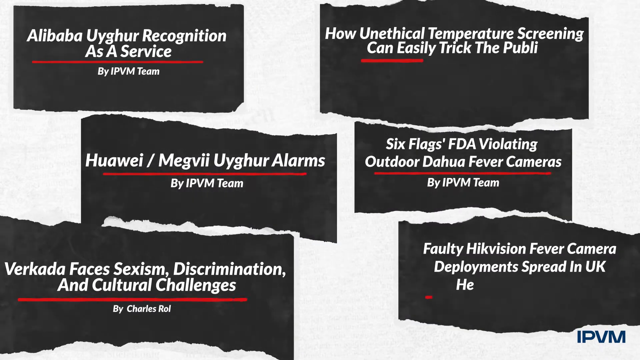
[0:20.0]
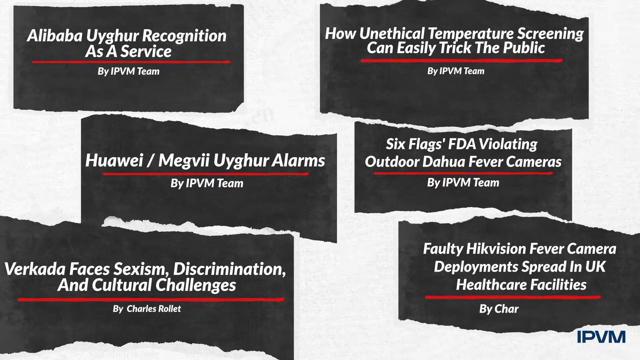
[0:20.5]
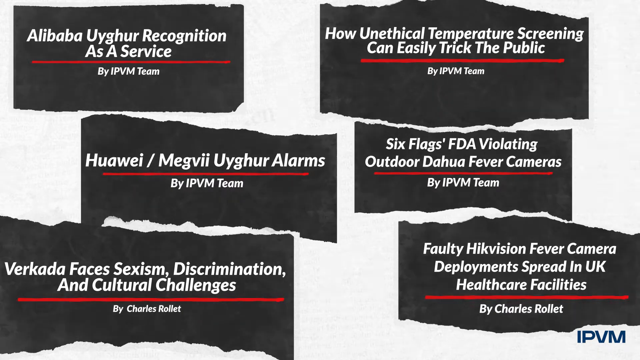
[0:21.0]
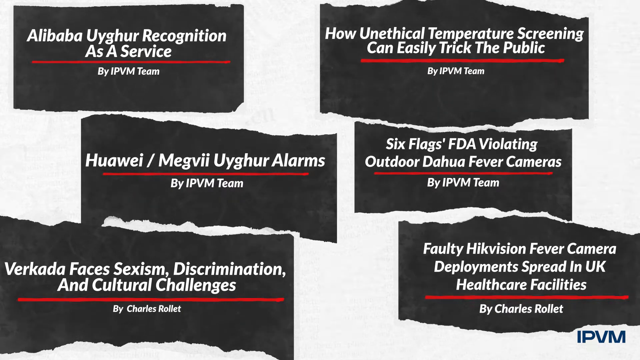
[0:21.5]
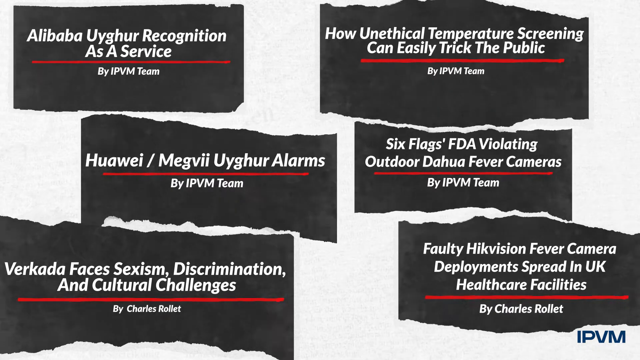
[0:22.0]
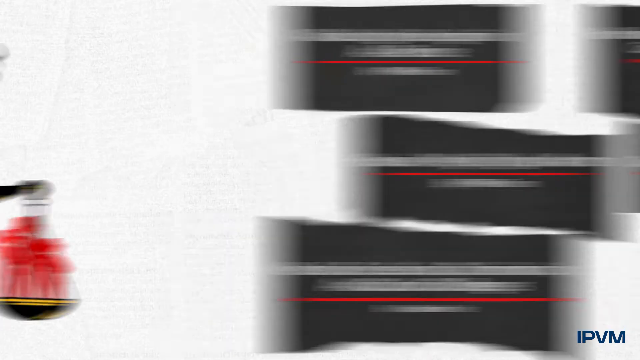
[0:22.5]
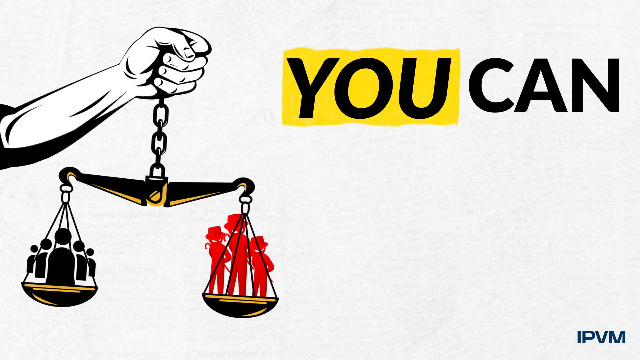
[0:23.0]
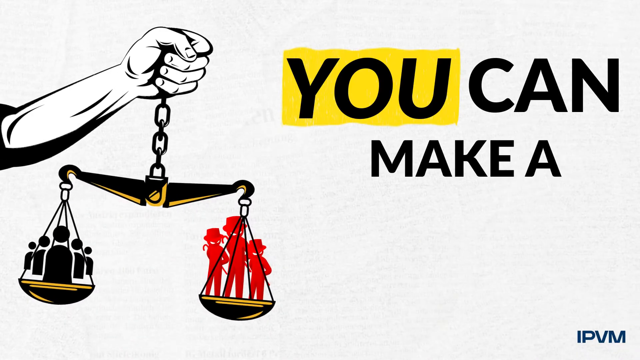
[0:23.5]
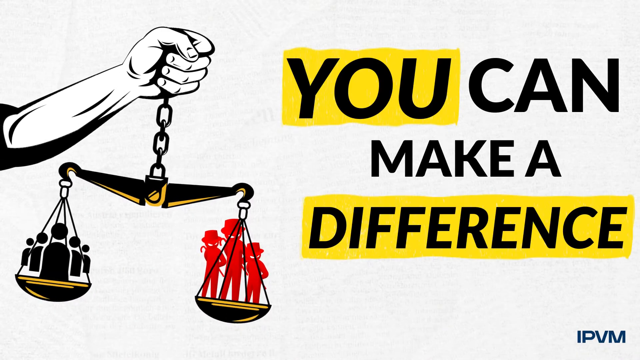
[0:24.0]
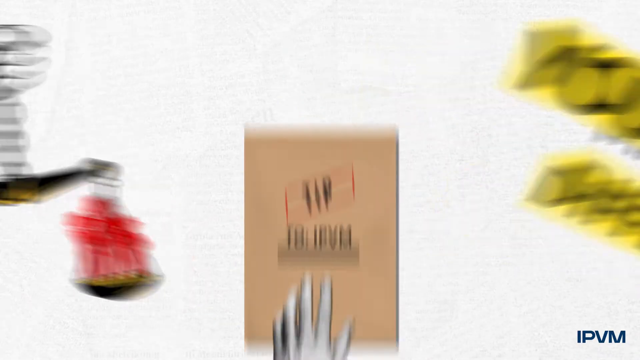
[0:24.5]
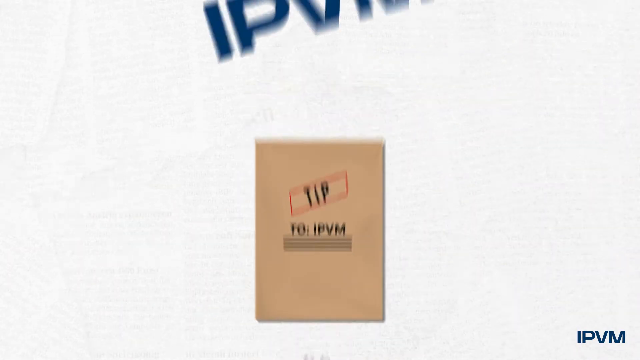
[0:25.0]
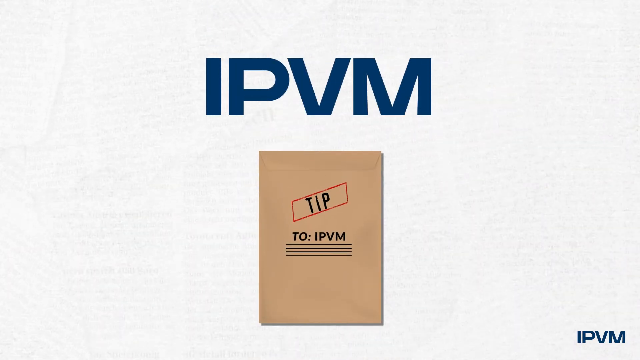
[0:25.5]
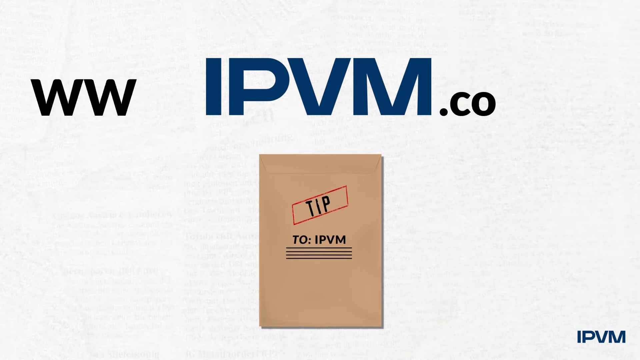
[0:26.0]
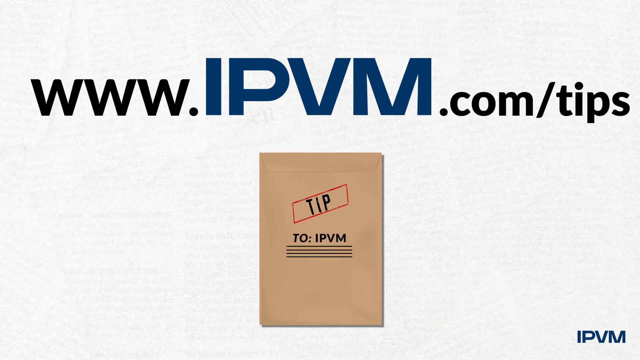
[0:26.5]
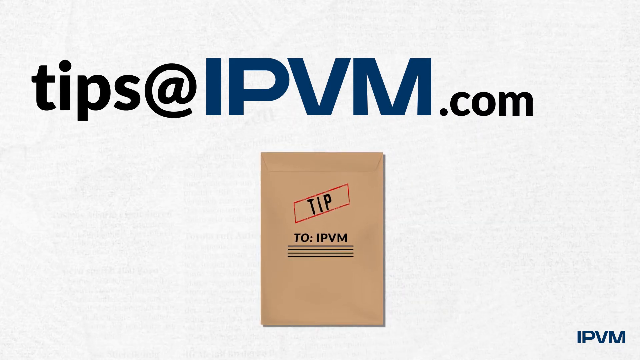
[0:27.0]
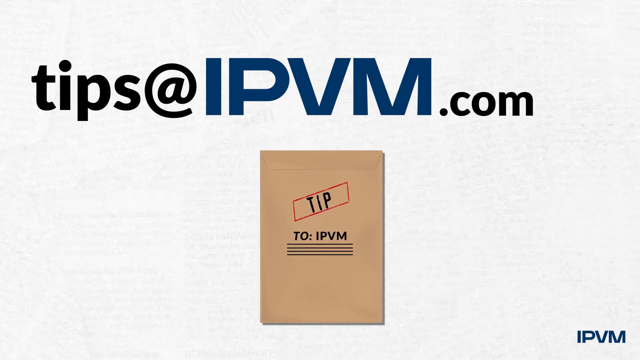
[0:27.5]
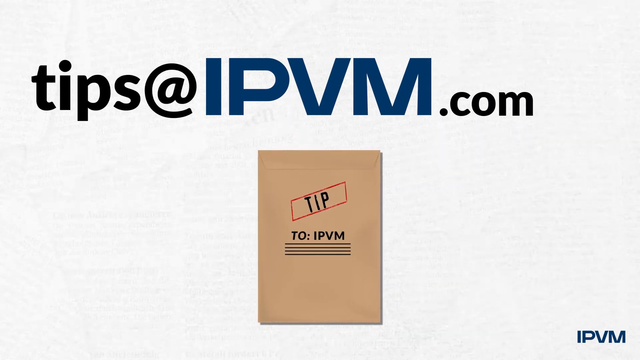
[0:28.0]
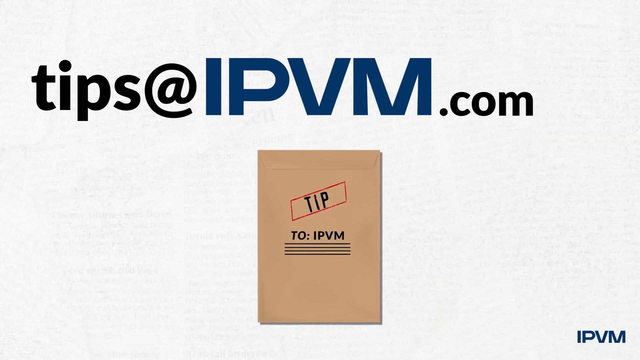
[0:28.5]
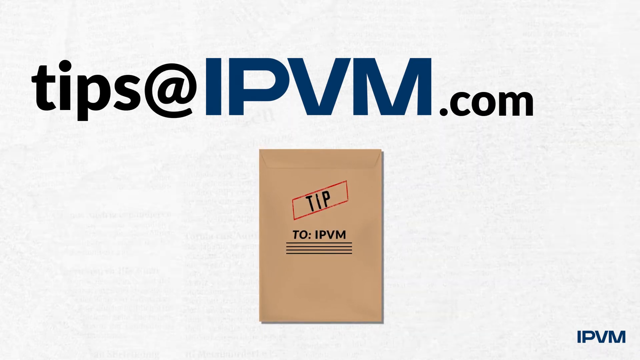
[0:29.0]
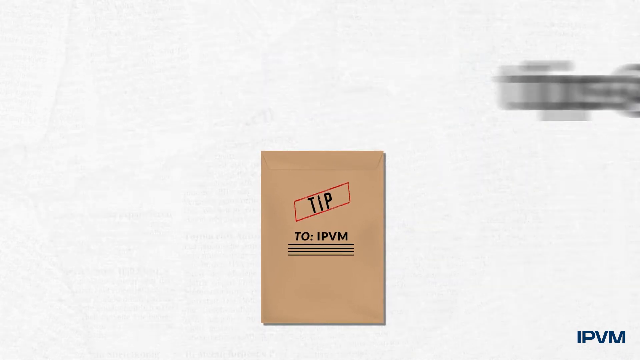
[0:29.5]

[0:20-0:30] Five or six cut-out newspaper articles are shown. The first, "Alibaba Uyghur recognition as a service," and at least the first four are written by IPVM team. The second is "How unethical temperature screening can easily trick the public," the third is a headline ending in "Uyghur alarms," and the fourth is "Six Flags FDA violating outdoor Dahua fever cameras." The article on the bottom left is "Verkada faces sexism, discrimination, and cultural challenges" by Charles Rowlett, and the sixth, on the far right, is "Faulty Hikvision fever camera deployment spread in UK healthcare facilities" by Charles Rowlett. The scene cuts to a justice scale with the text "you can make a difference," with "you" and "difference" highlighted. Then a manila envelope appears with the stamp "tip" and "to IPVM," along with the URL "IPVM.com" and an email address, "tips at IPVM.com."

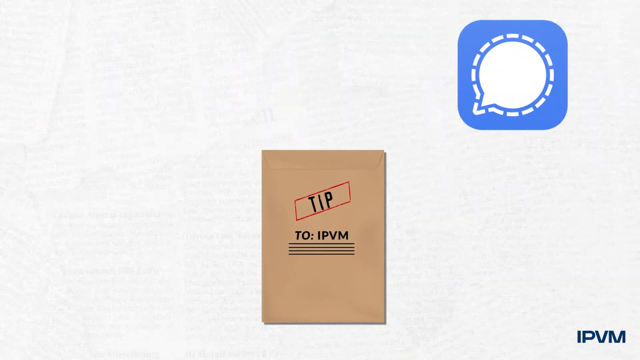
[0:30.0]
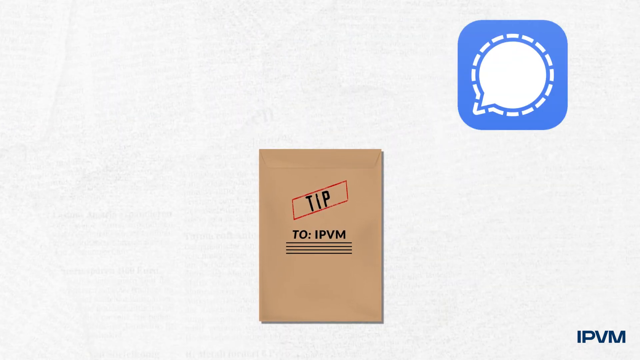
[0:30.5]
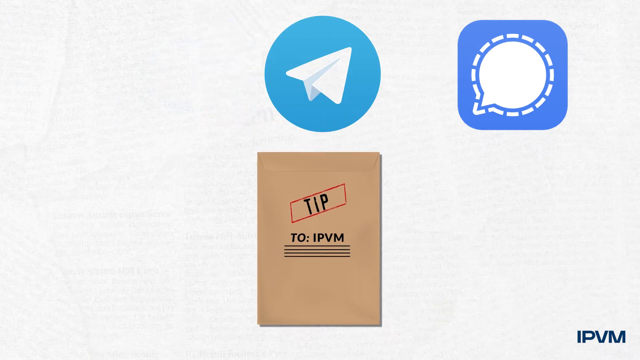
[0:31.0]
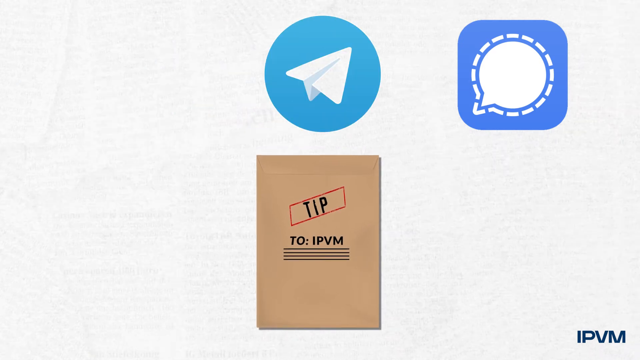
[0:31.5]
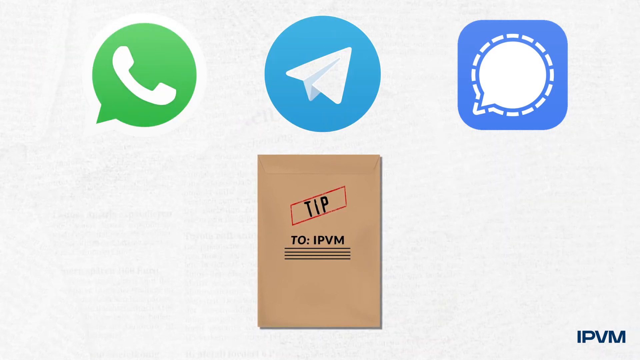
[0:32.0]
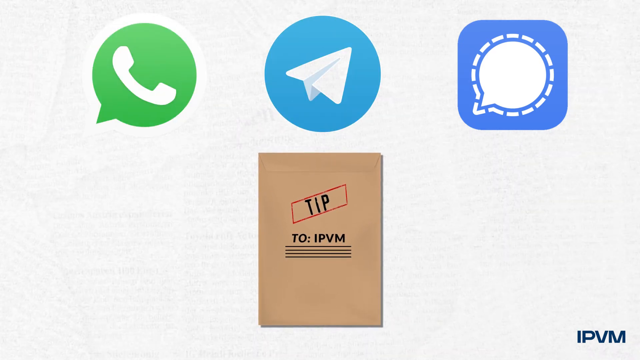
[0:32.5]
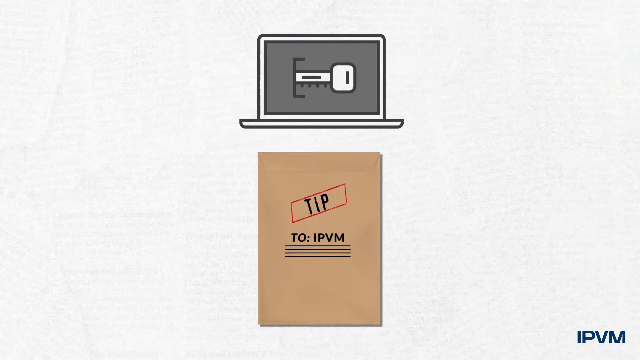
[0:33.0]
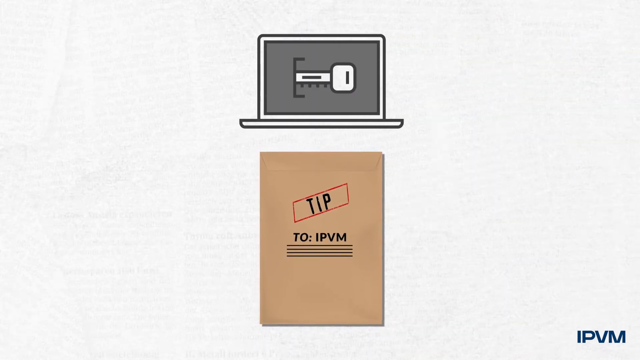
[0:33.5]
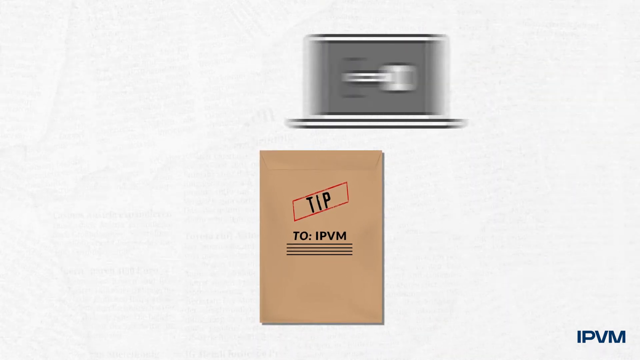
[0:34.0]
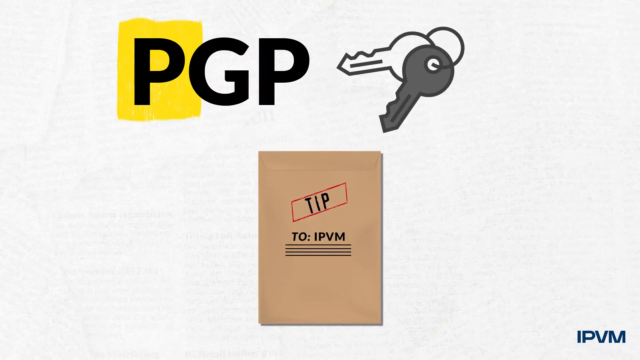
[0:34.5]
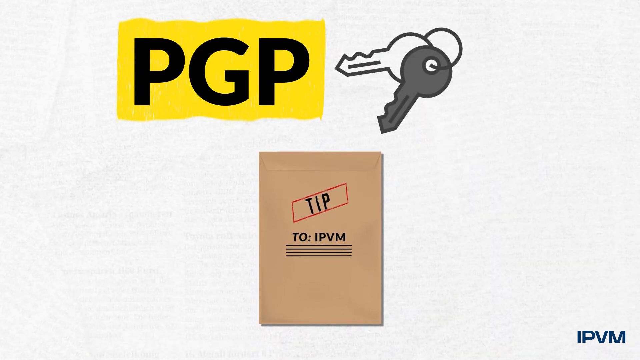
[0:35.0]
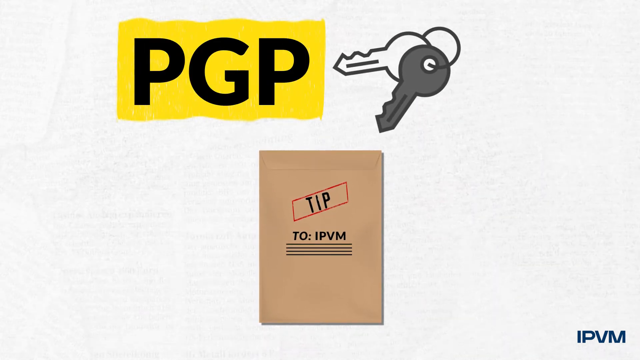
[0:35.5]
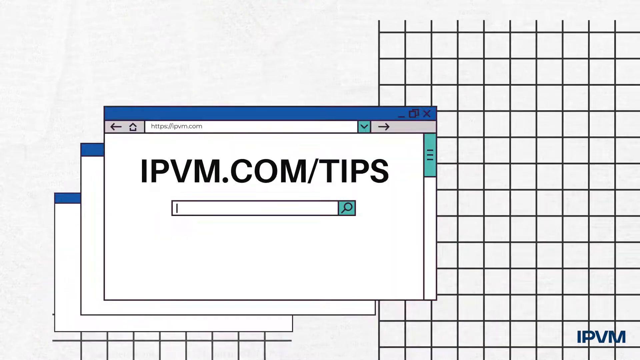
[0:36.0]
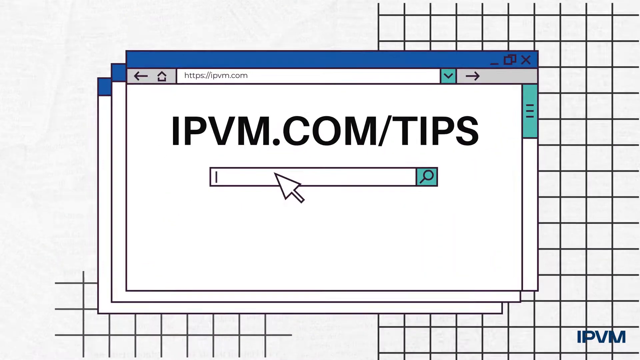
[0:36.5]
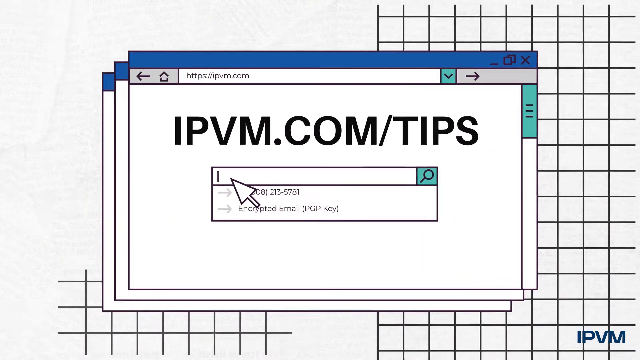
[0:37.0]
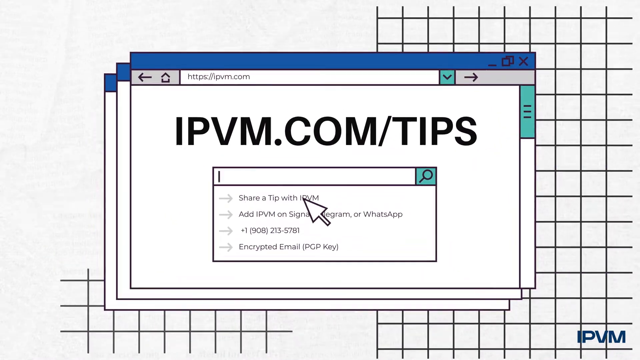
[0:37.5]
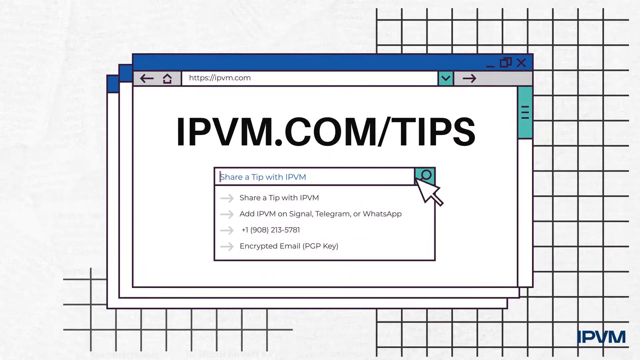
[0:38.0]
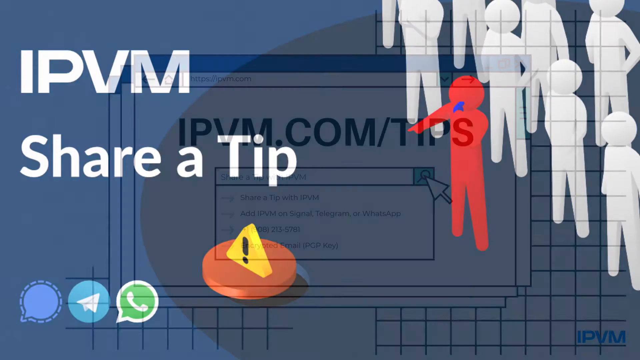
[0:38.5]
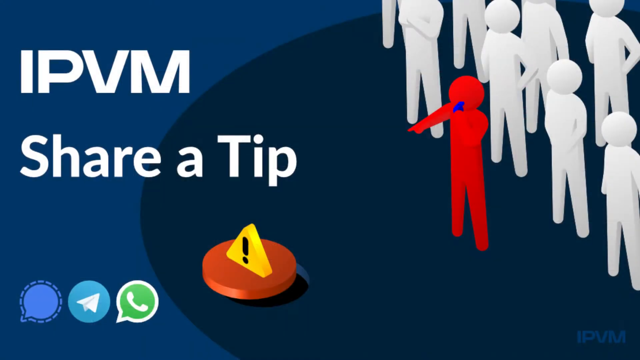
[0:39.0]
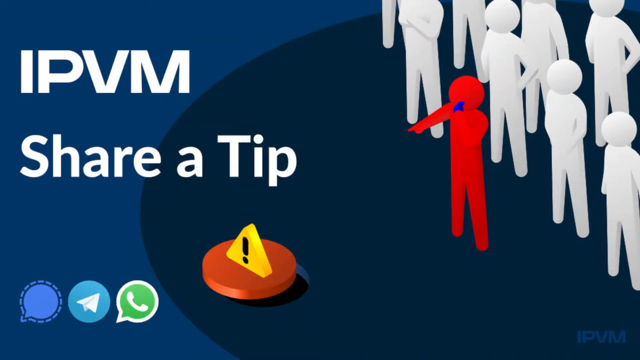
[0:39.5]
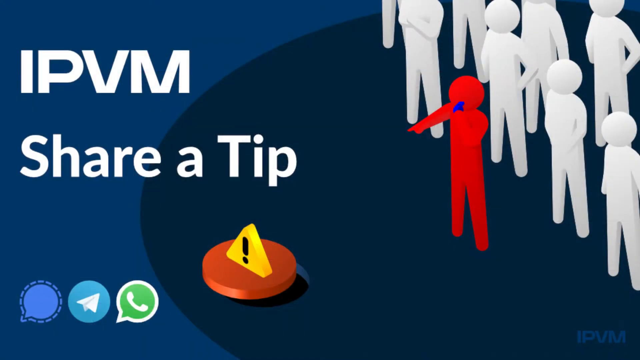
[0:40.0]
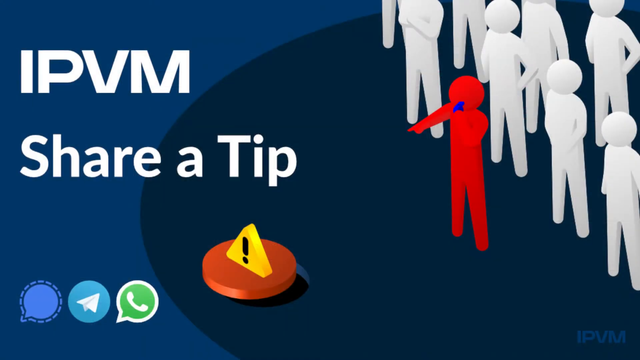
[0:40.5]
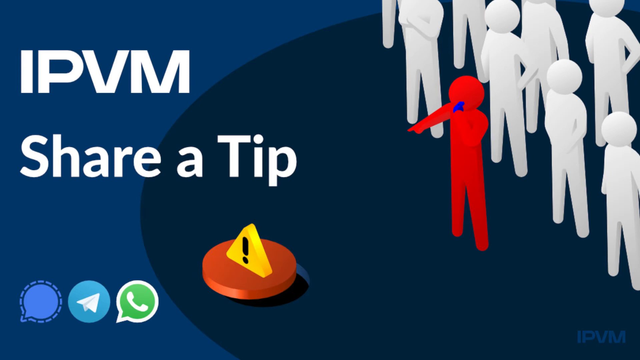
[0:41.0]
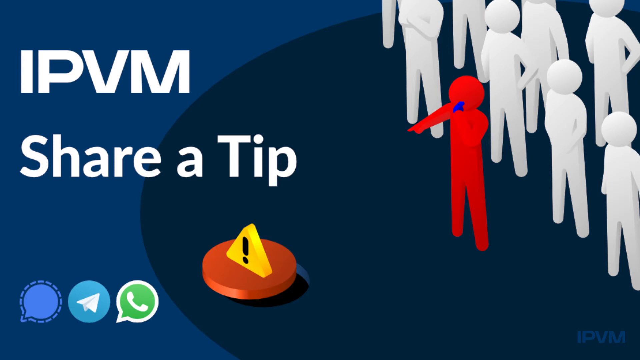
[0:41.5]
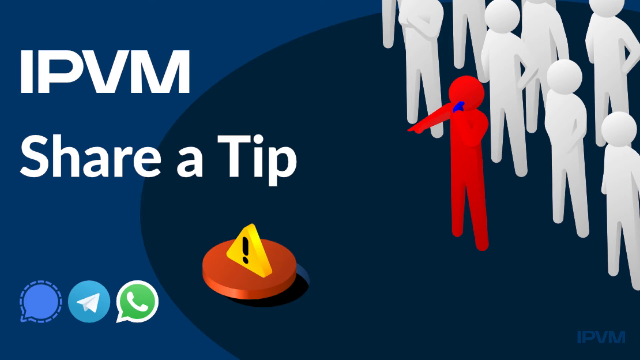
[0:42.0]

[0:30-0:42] A manila folder shows a "tip" stamp and "to IPVM" underlined four times. Above the envelope are three icons: a phone outline on a green talk bubble, a paper airplane on a blue bubble, apparently for sending a message, and a white talk bubble with a dashed white outline on a blue square. The scene changes to a small Windows browser with the URL "ipvm.com/tips" and a search bar, which expands and becomes larger. The video then goes back to the "IPVM share a tip" graphic and ends. The images go by very quickly.